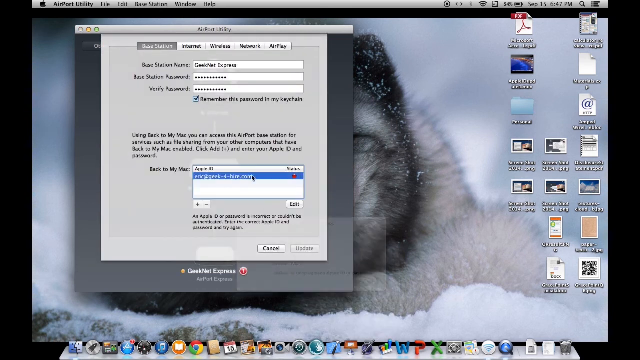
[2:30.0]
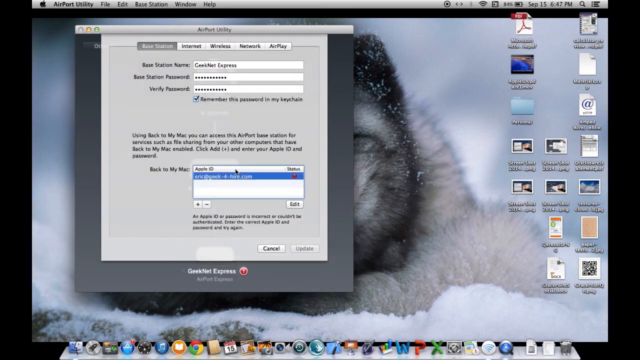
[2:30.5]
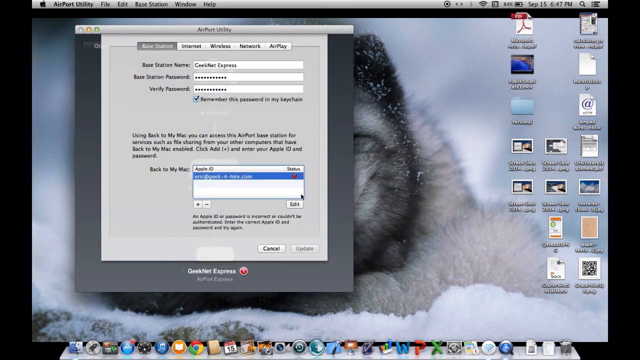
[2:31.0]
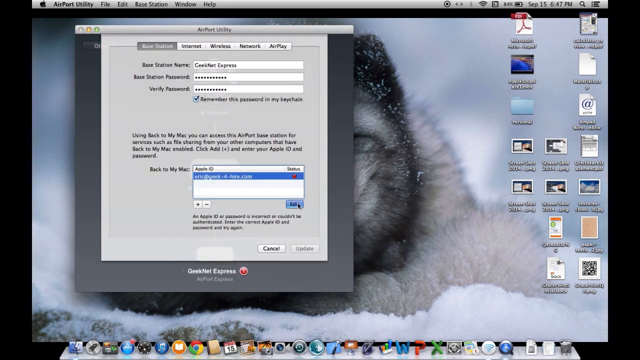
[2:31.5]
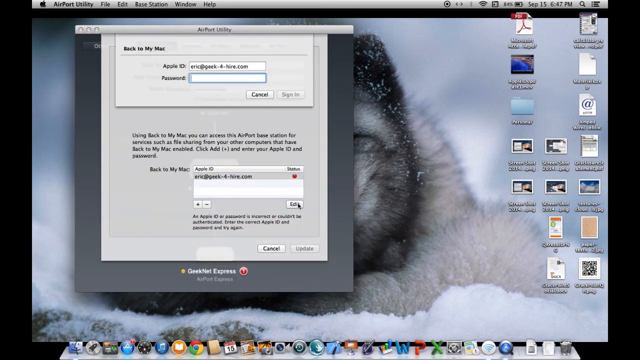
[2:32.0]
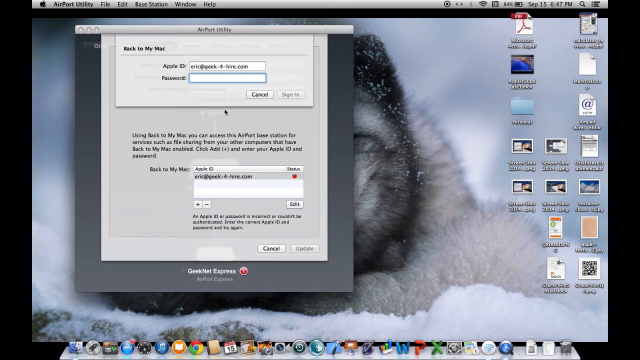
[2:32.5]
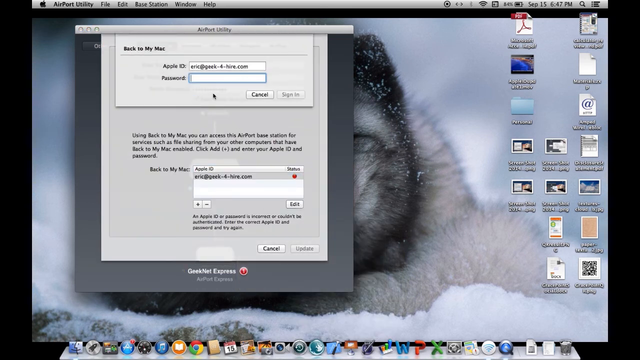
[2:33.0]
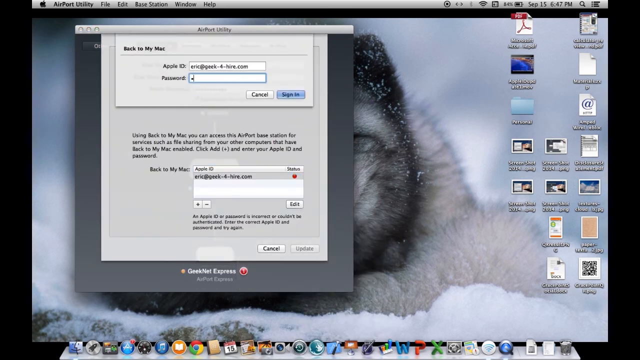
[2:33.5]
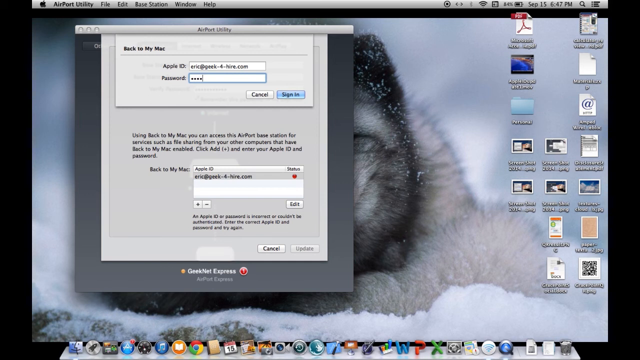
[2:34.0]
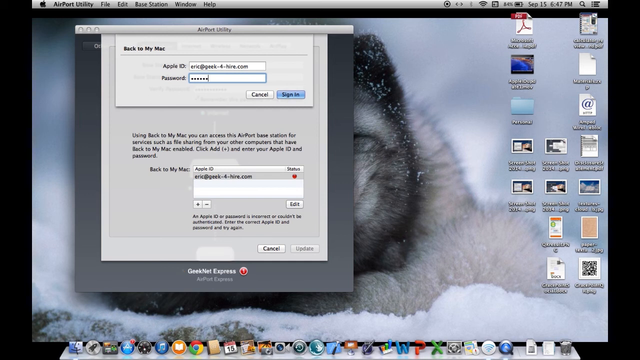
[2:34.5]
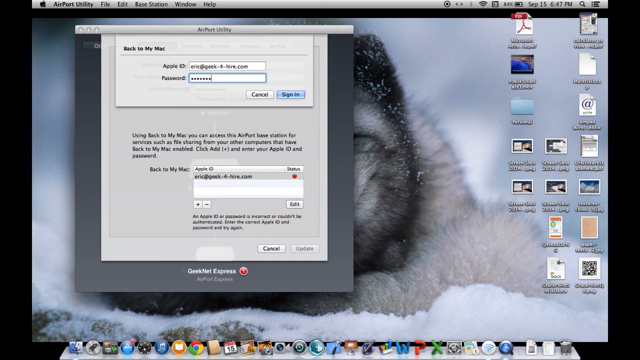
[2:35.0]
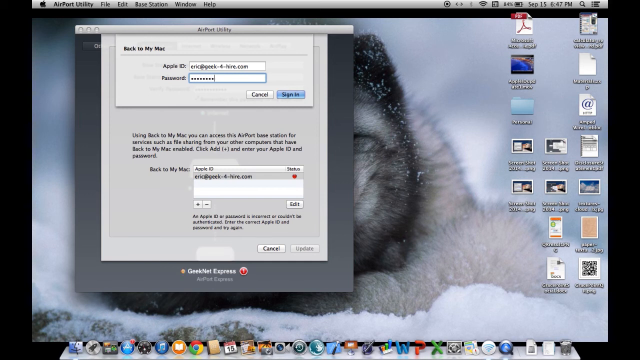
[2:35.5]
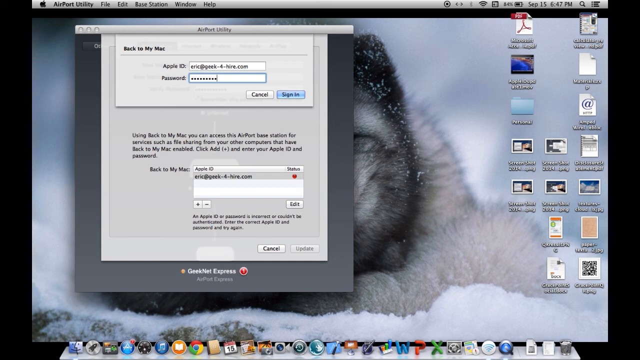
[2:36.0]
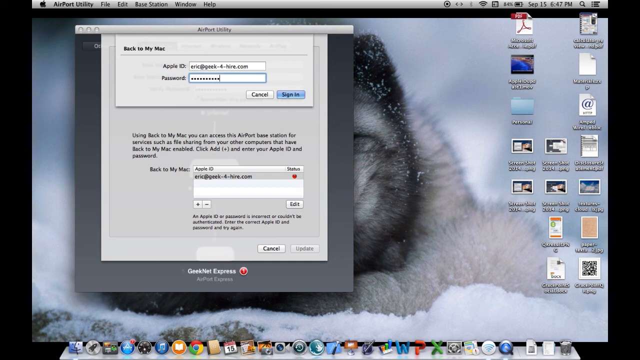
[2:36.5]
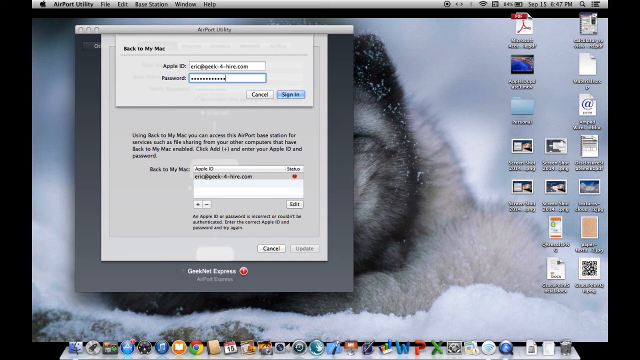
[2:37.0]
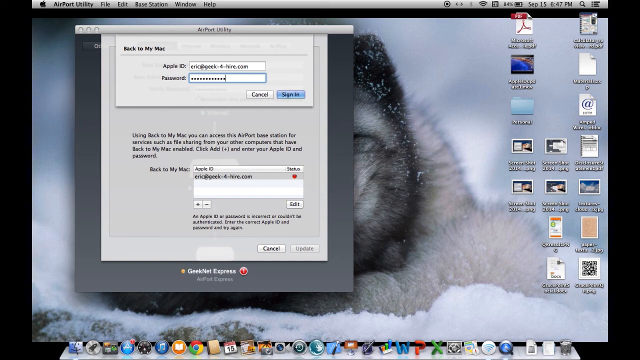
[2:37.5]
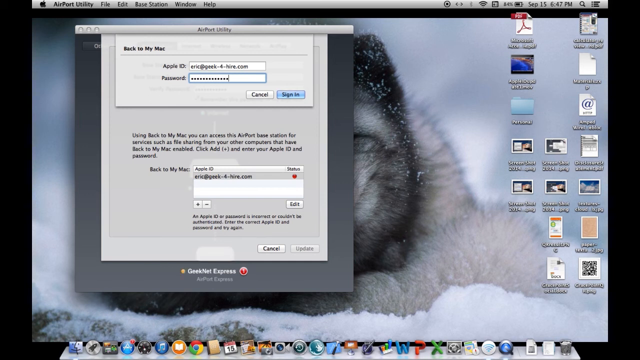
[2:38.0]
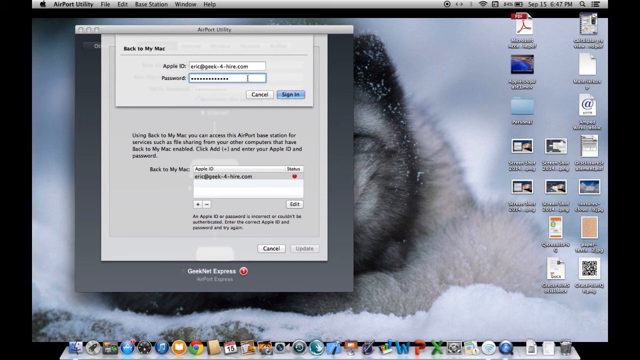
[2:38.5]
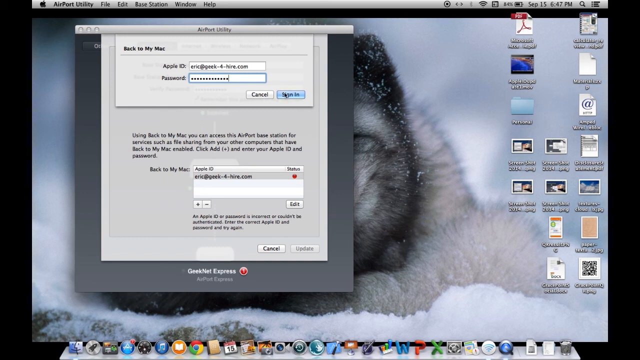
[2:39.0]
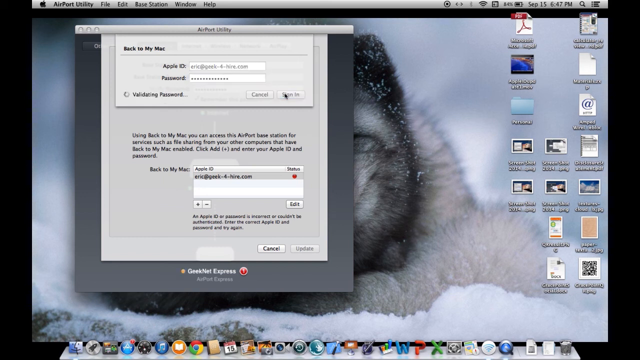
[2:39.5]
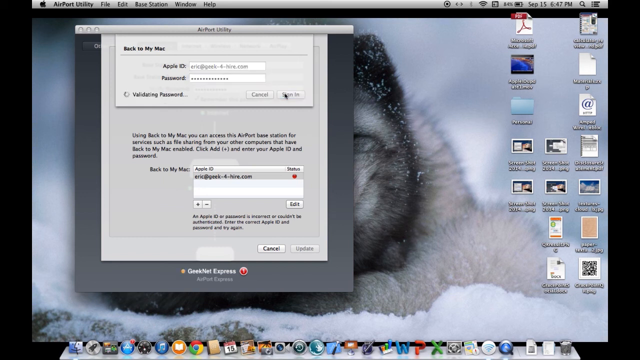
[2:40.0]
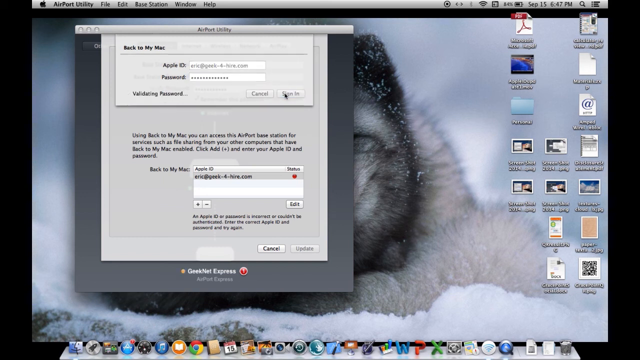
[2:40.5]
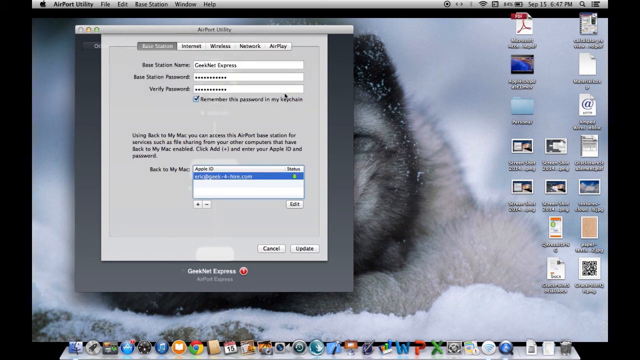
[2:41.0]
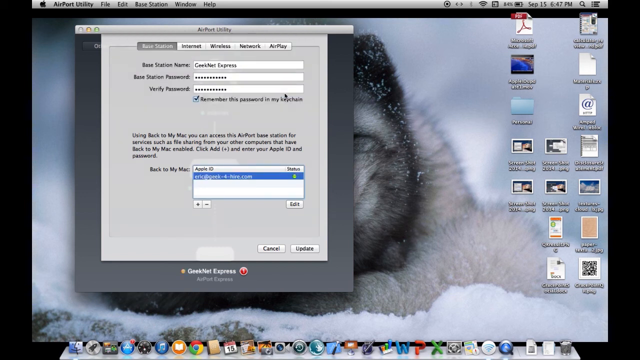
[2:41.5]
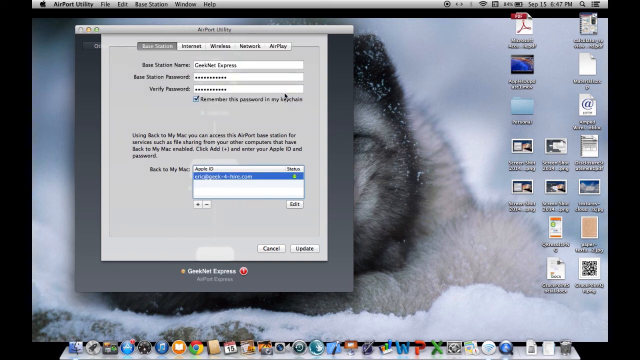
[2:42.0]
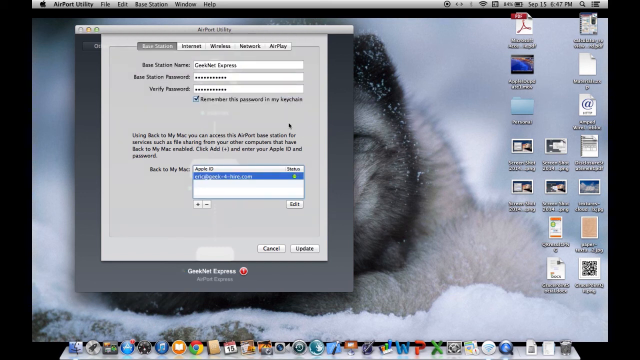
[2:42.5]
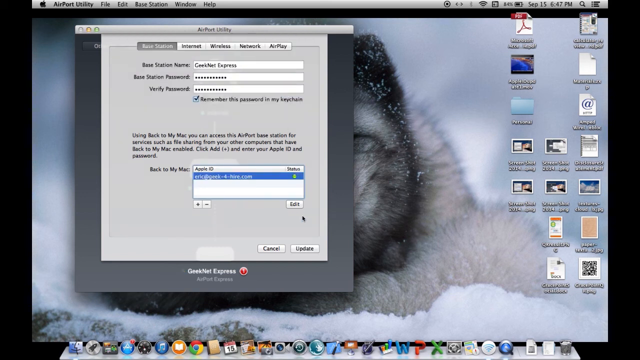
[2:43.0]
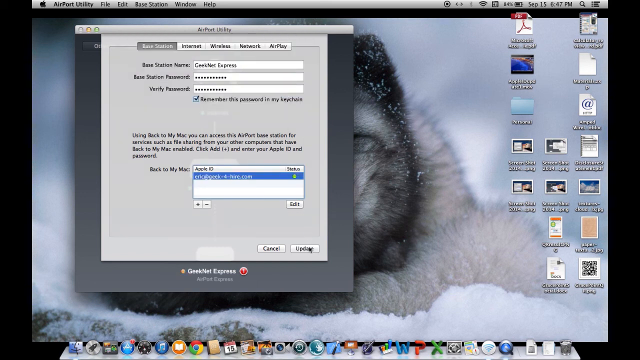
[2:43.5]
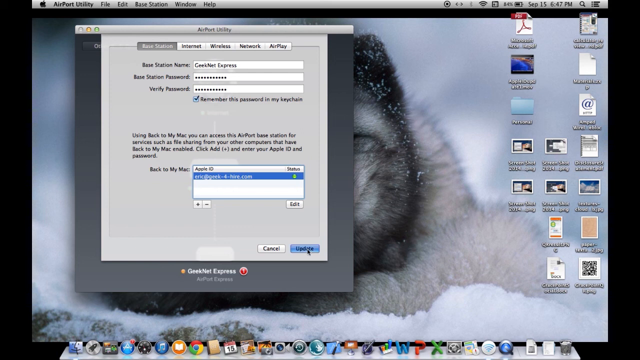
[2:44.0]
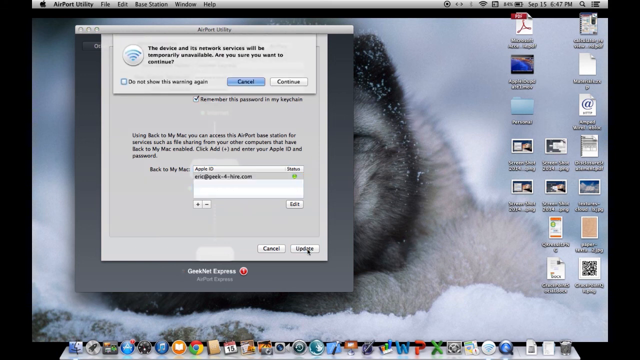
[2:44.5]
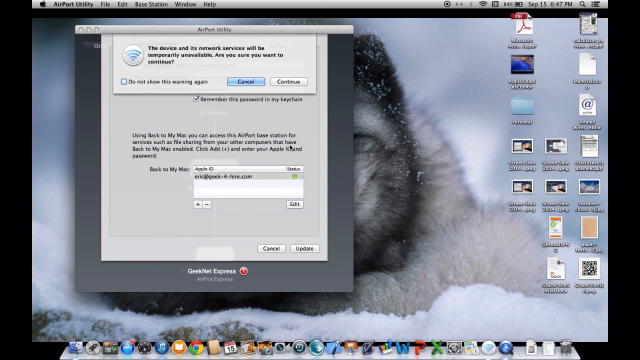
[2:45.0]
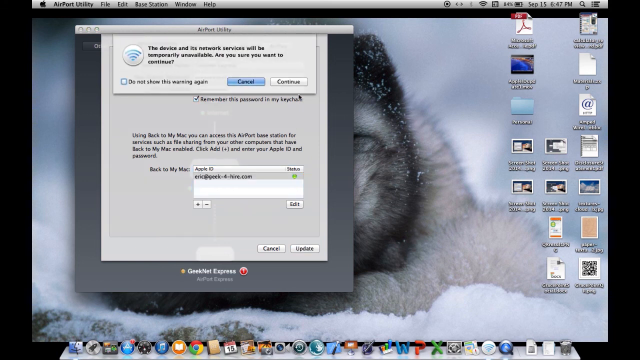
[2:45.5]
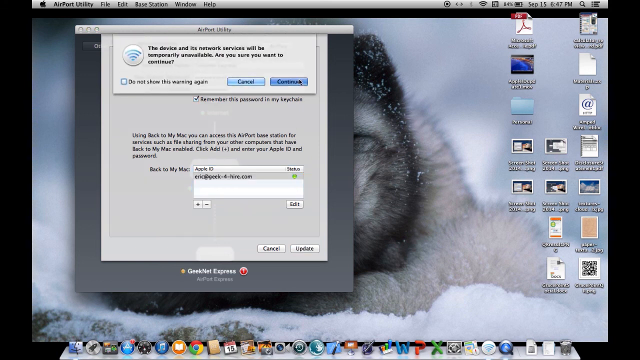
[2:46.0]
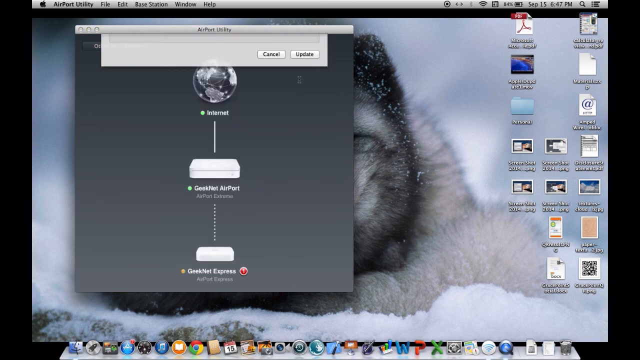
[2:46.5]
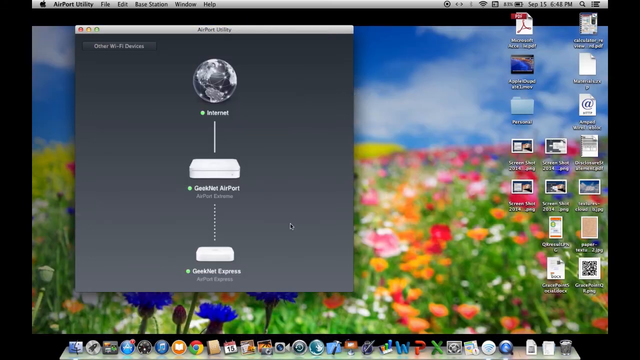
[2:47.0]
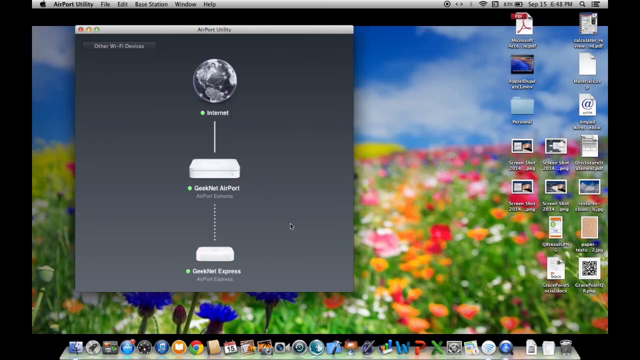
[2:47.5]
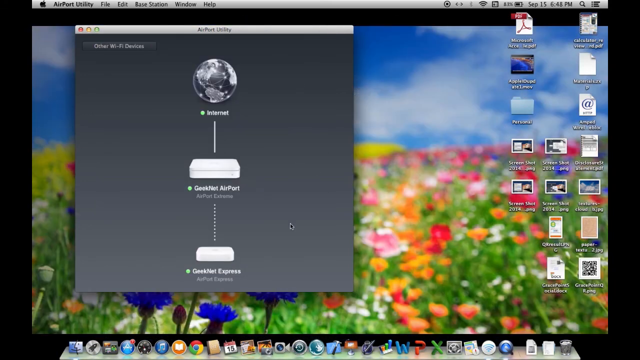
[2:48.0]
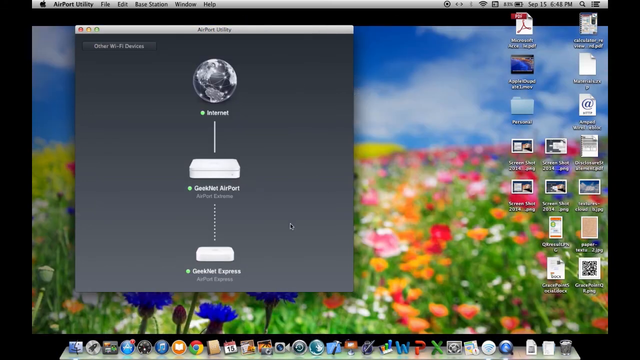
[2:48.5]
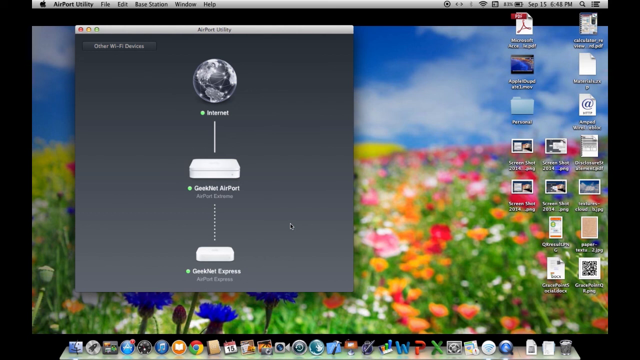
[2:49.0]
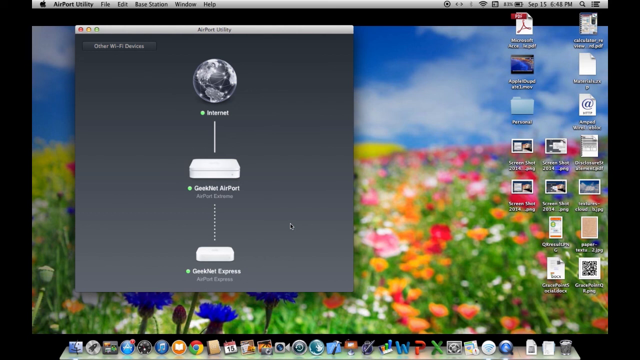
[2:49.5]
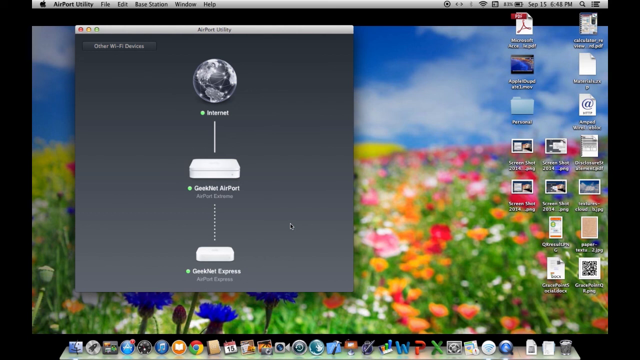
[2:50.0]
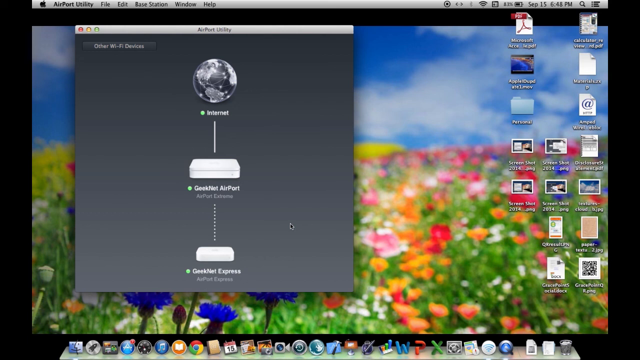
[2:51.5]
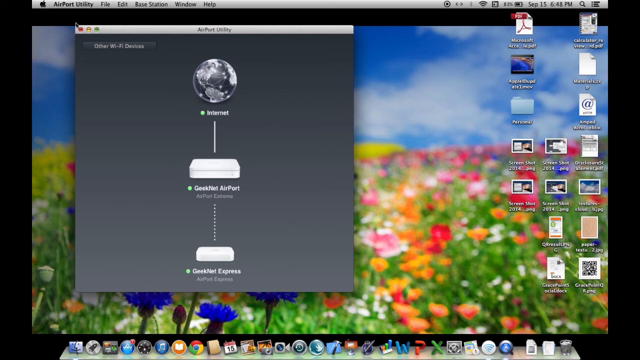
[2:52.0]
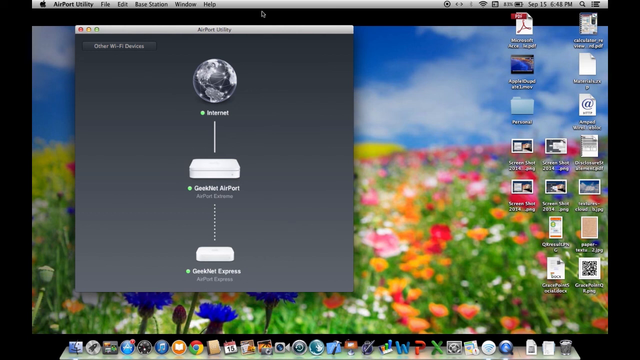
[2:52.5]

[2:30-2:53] The background picture changes to some kind of fuzzy little snow animal. The user is still trying to update their password and clicks continue. Suddenly the Express item at the bottom turns green. The user edits, enters a password and signs in, and the screen shows "validating password"; this time it seems to have worked, with an update, and the user is logged in. Later the background changes to a flower picture.